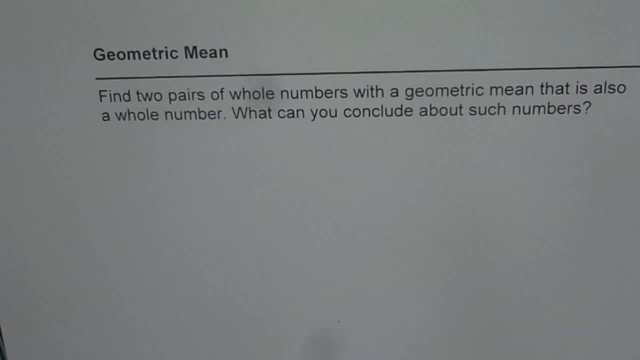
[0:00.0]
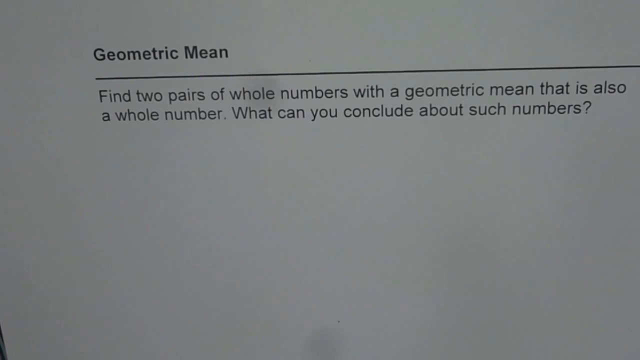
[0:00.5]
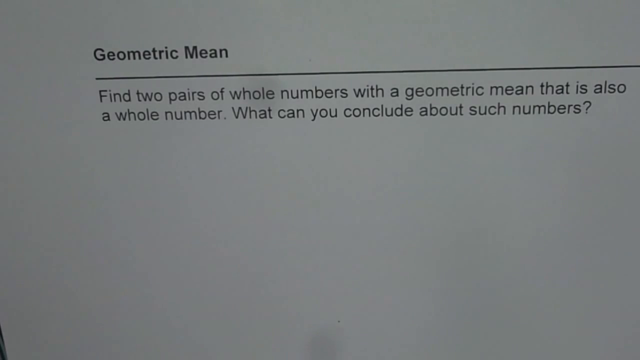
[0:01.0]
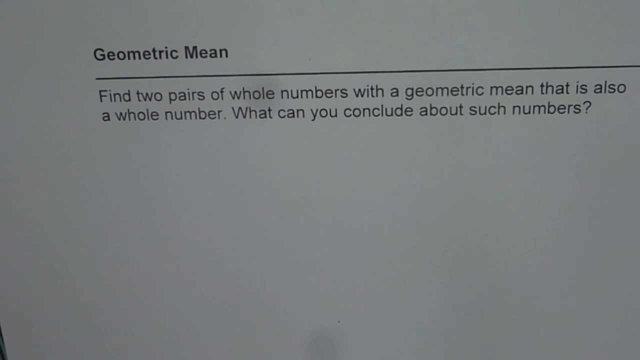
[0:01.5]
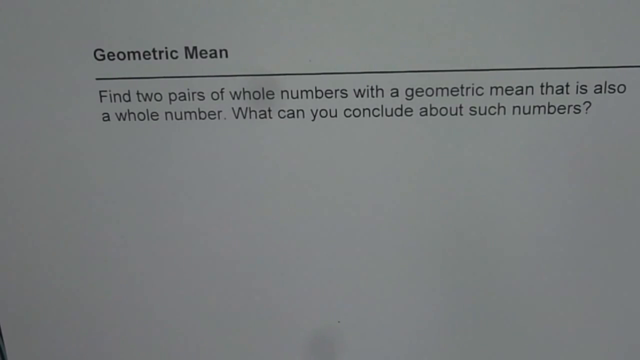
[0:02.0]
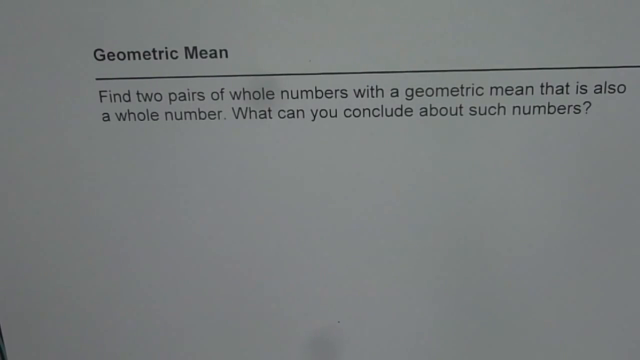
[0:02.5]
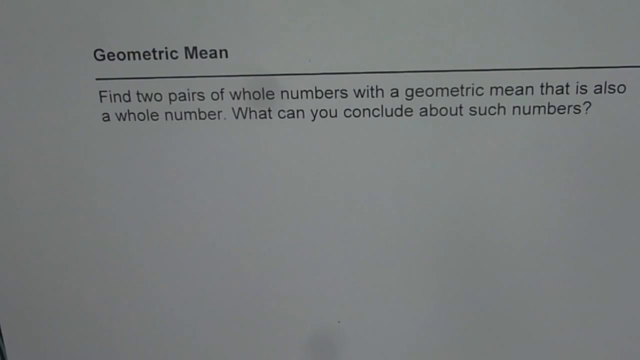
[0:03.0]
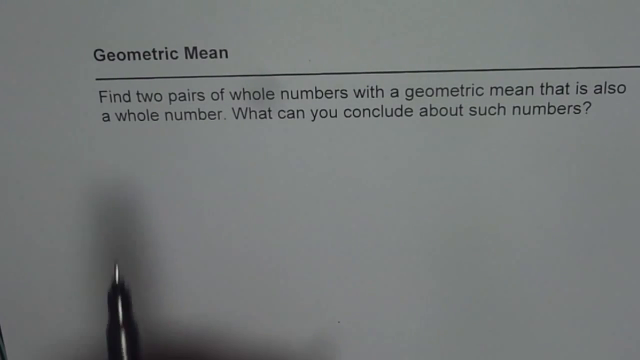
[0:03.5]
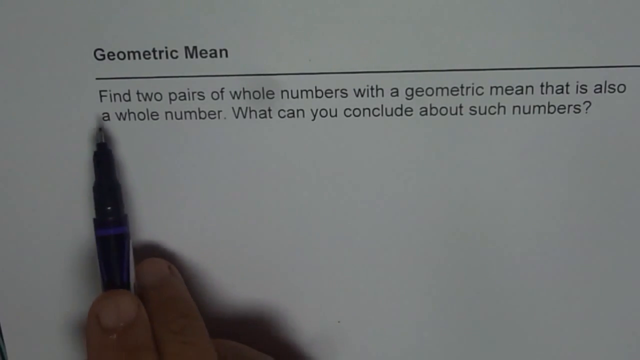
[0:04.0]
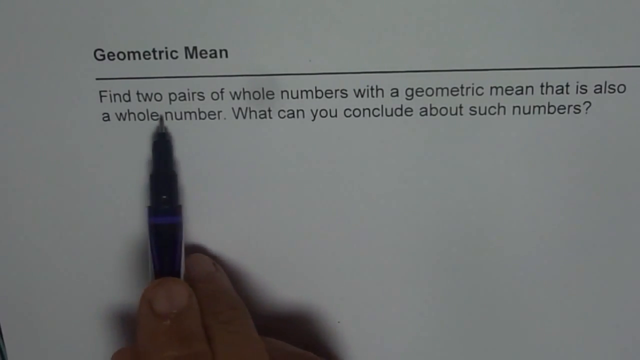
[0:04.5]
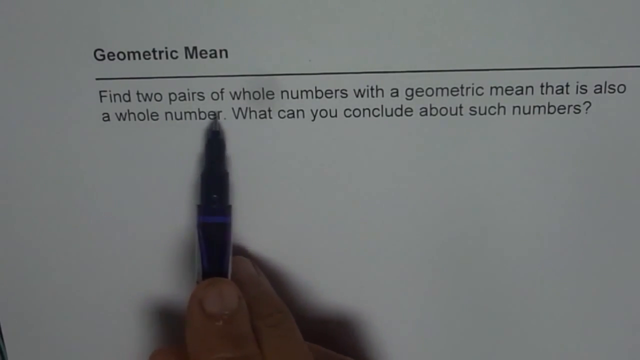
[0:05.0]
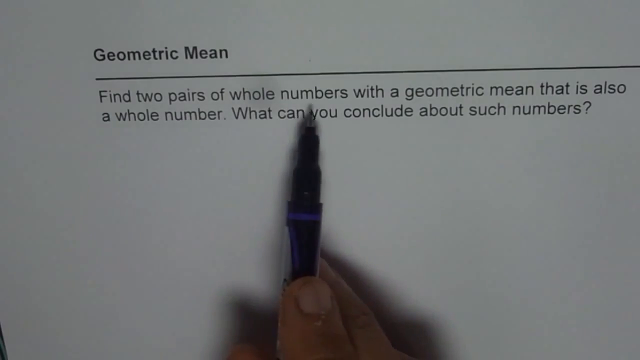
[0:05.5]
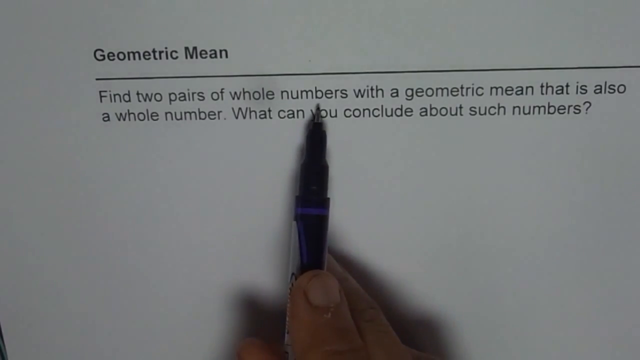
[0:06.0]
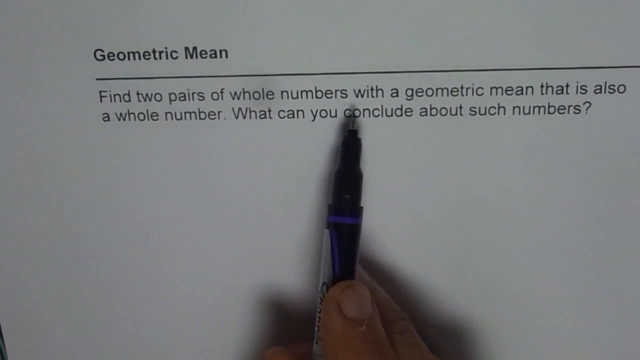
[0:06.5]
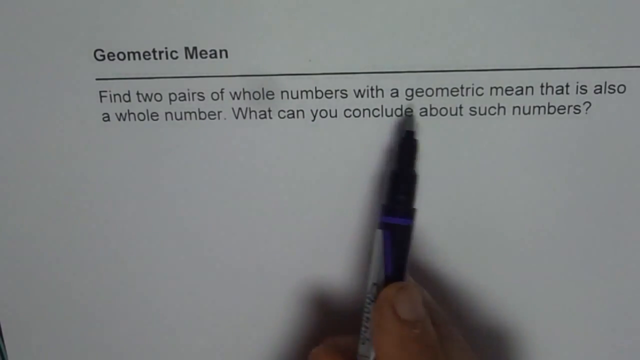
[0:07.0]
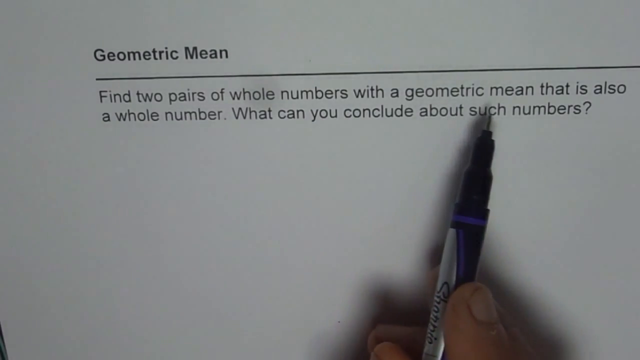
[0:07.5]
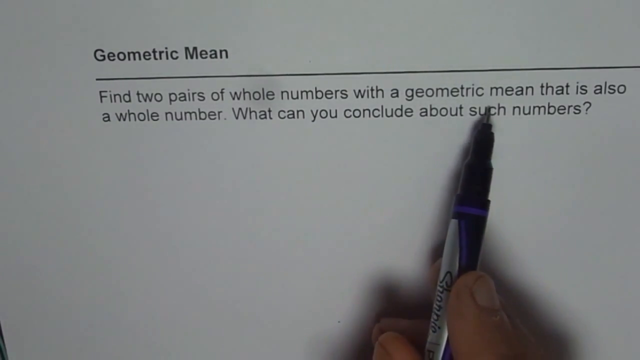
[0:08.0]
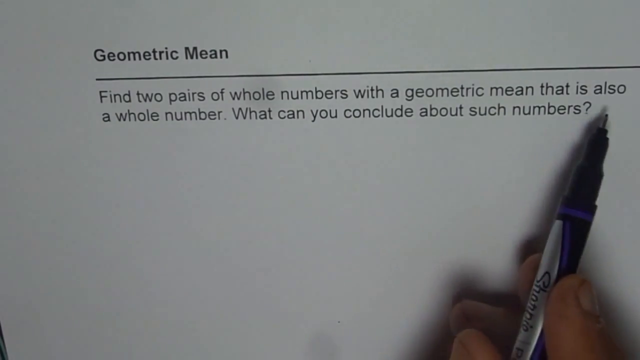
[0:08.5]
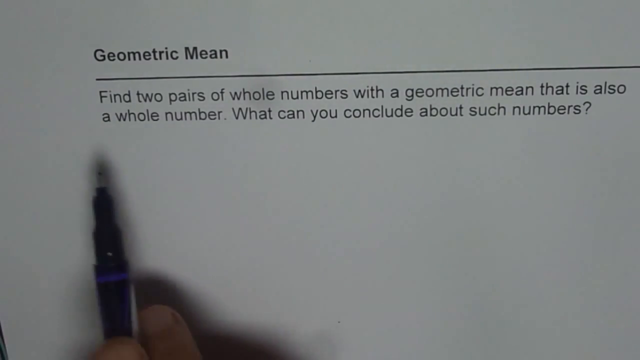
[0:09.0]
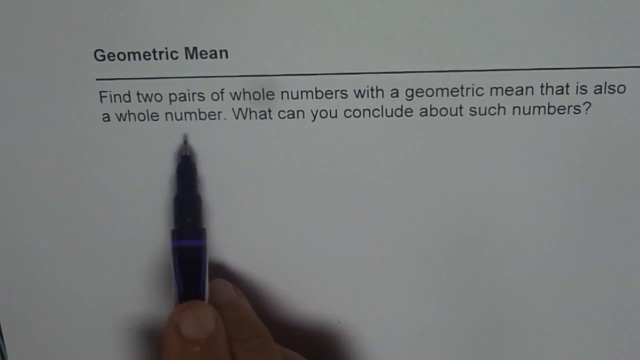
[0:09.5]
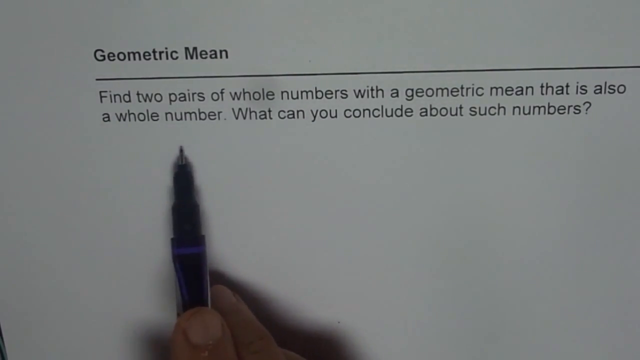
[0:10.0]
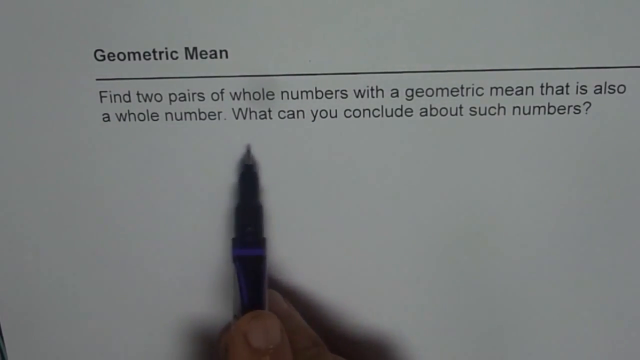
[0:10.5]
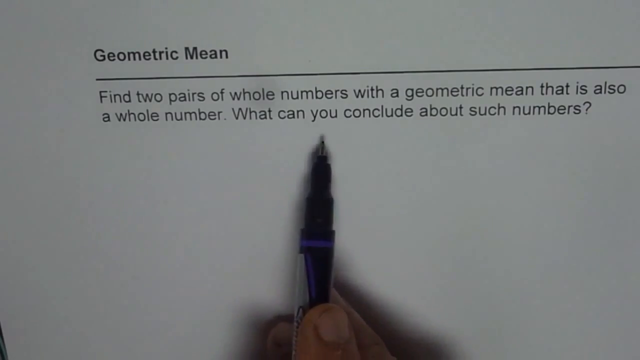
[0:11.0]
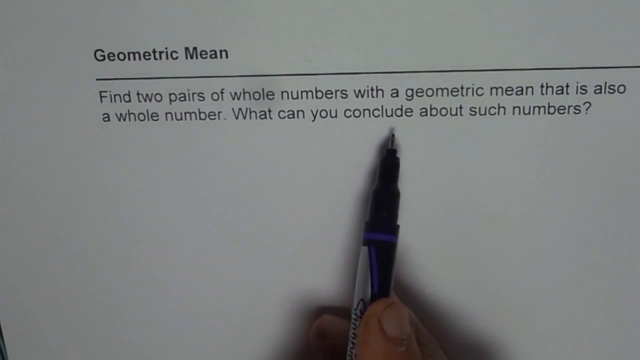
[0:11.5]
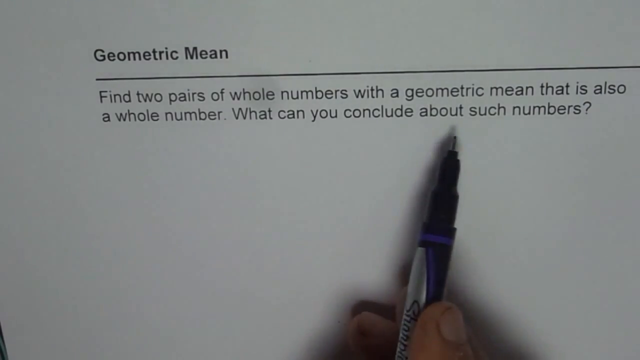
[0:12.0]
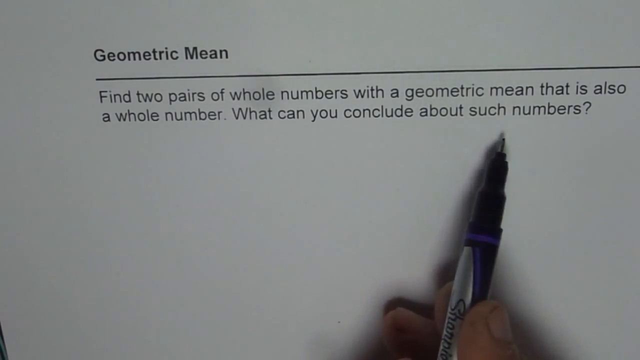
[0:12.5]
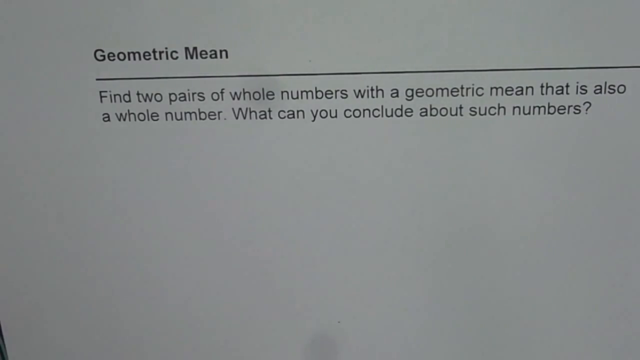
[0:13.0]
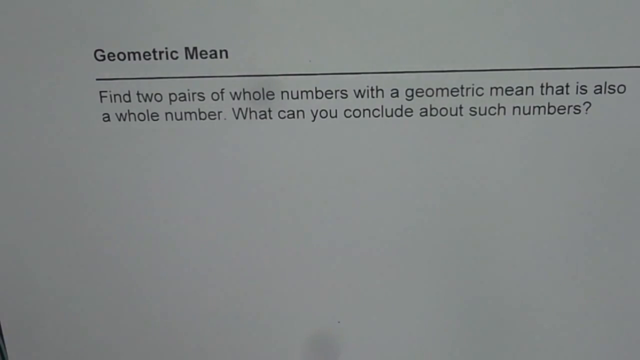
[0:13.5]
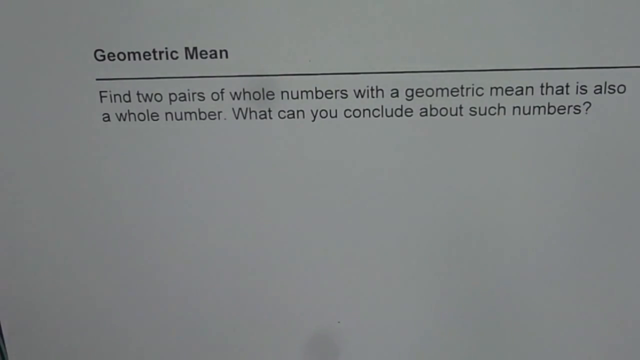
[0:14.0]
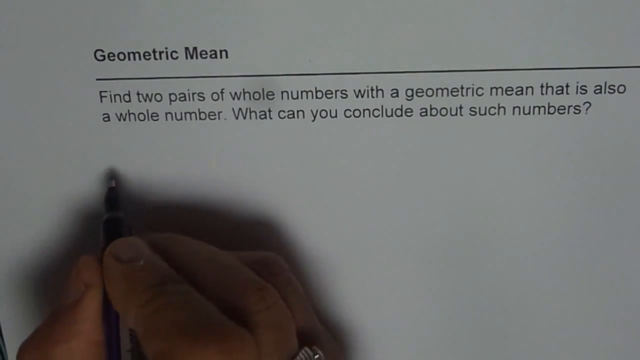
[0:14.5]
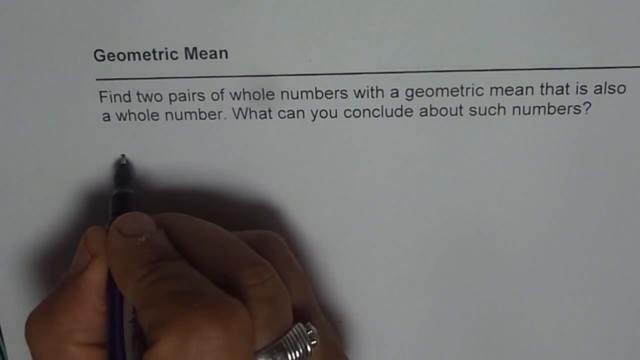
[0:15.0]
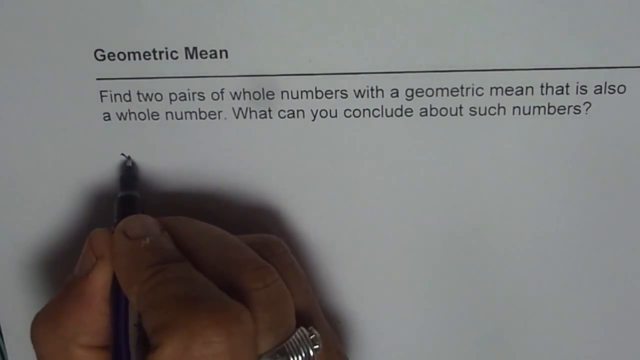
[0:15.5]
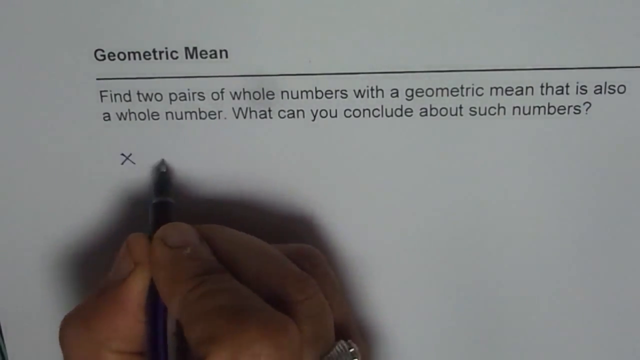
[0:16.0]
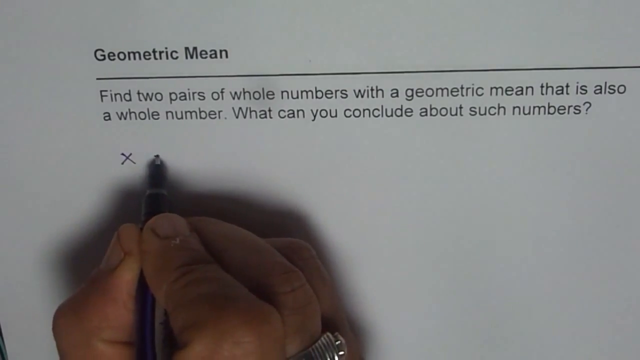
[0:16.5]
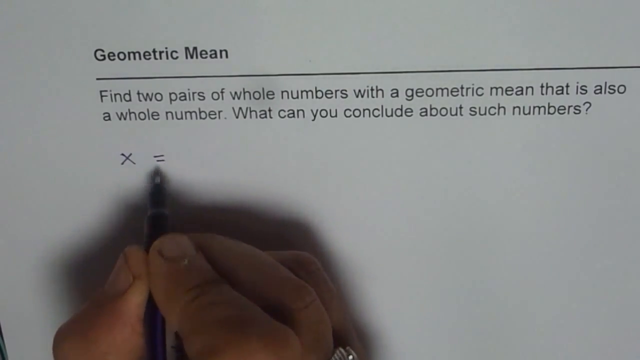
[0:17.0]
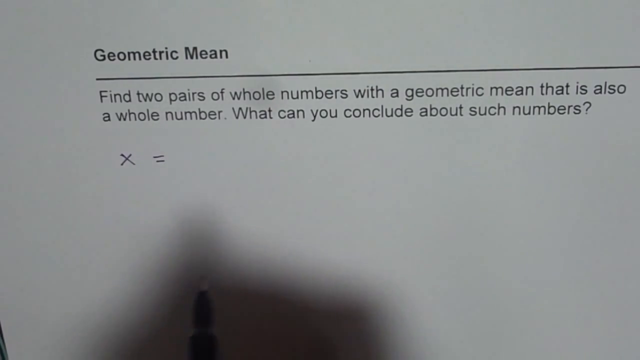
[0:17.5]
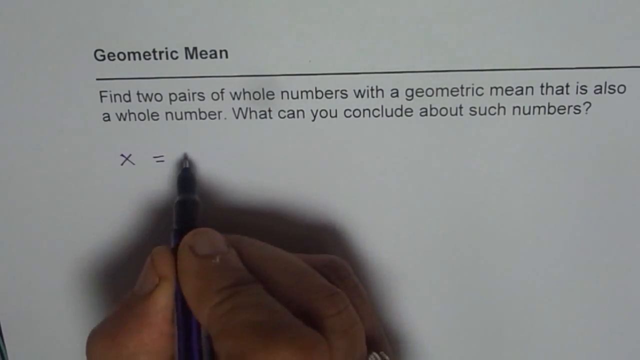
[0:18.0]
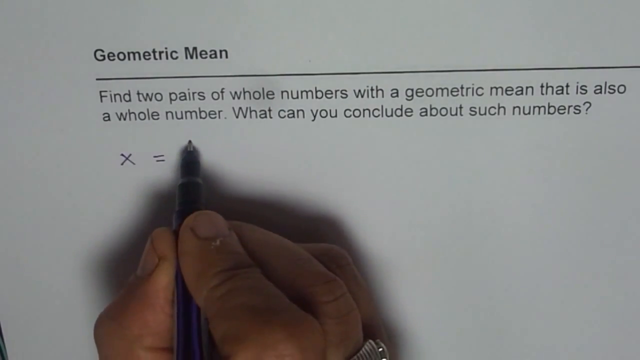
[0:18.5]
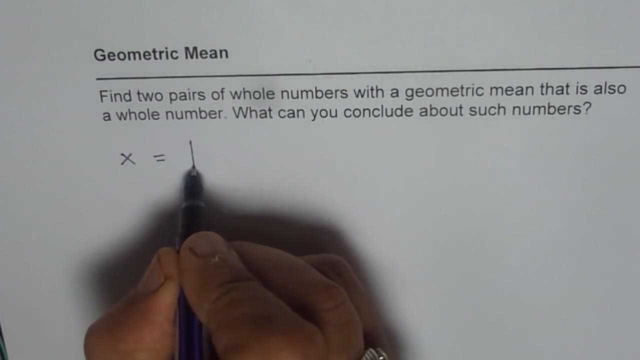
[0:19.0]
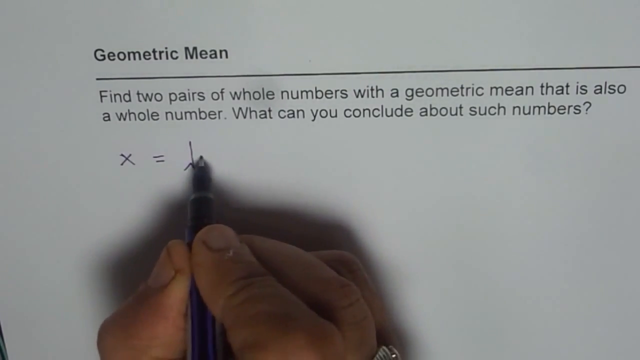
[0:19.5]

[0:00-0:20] Someone is helping solve a math problem on a dimly lit white paper with black writing and a darker, bolder headline. A hand that looks like a man's comes into the scene from the bottom left holding a black pen with a purple stripe and taps on, or below, each word one by one, as if reading off the words to help the viewer understand what is being said. Each time he taps under a word, he lifts the pen and taps it at the next word, continuing until he has gone through every word in the math problem. When he is done, the hand and the pen leave the picture. A few seconds later the shadow of the hand and the tip of the pen enter the screen, and then the full hand and the pen come back. Starting from the left-hand side of the screen, the hand and pen begin writing out how to solve the math problem.